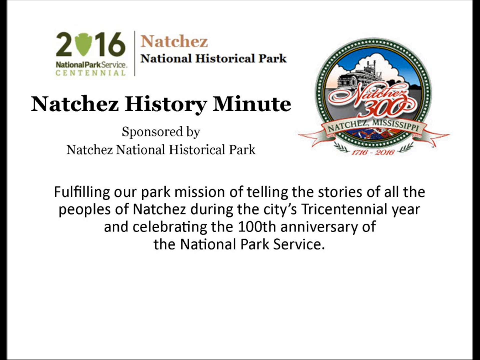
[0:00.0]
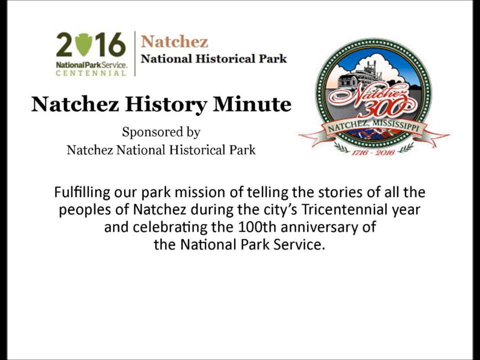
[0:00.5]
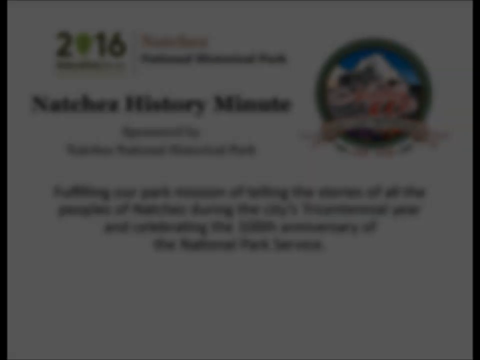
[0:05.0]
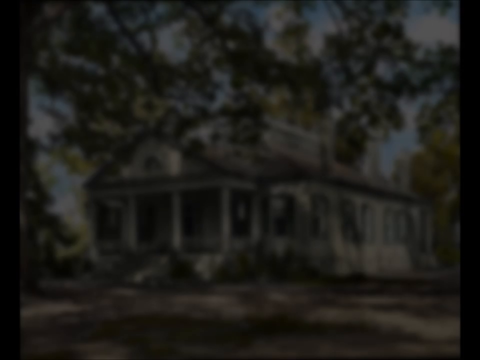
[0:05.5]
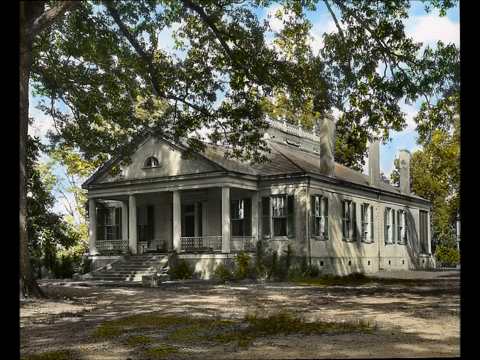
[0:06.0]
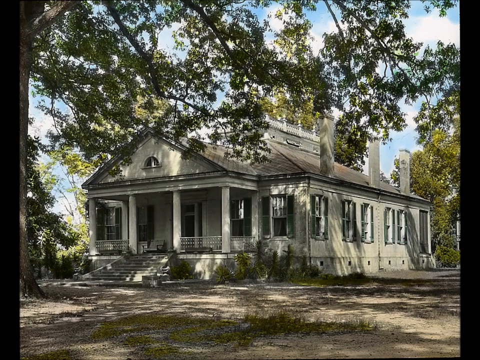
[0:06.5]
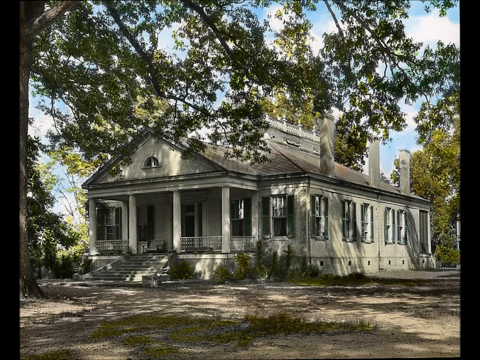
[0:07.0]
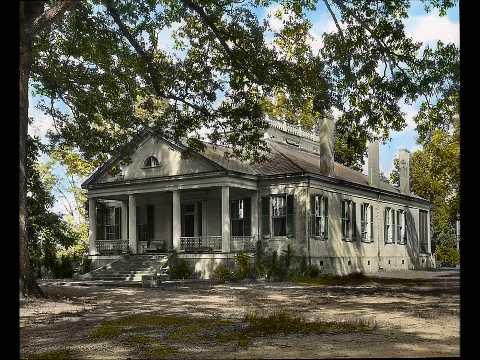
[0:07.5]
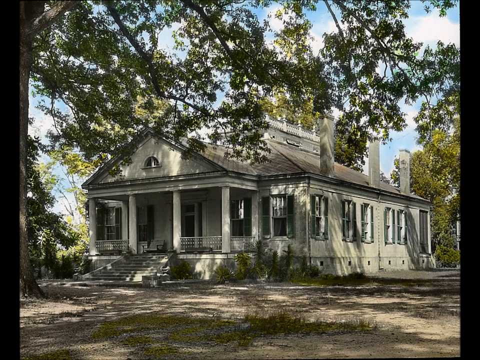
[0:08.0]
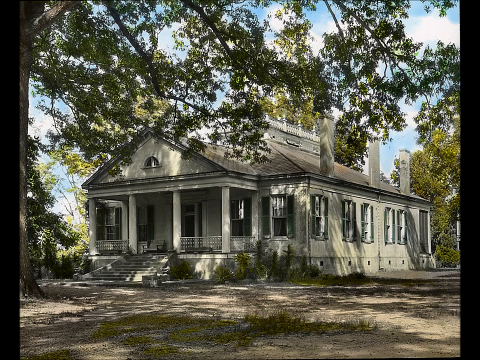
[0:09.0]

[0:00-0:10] A logo appears in the top right corner; it looks like it has a steamboat on it and reads "Neches, Mississippi." The screen almost looks like a certificate, with text reading "2019 National Park Service Centennial Neches National Historic Park Neches Historic Minute Sponsored by Neches National Historic Park fulfilling our park mission of telling the stories of all of the people of Neches during the city's tricentennial year and celebrating the hundredth anniversary of the National Park Service." The screen then goes black and switches to an old building that almost looks like a church. It has a big porch with a stairway that is narrow and gets wider, and it looks like it is made of concrete.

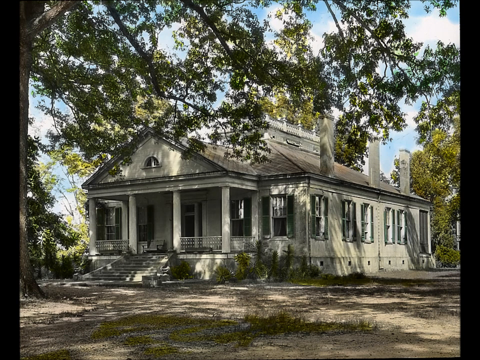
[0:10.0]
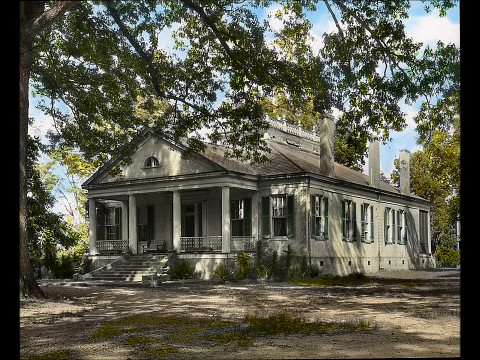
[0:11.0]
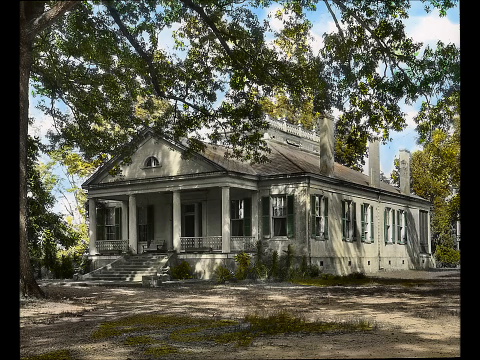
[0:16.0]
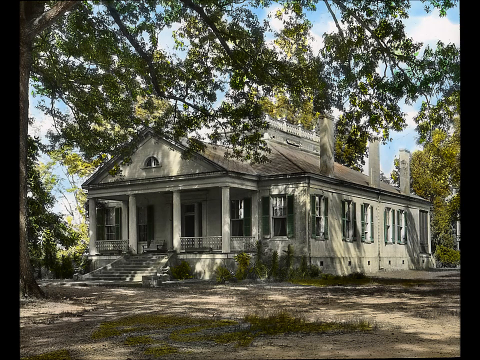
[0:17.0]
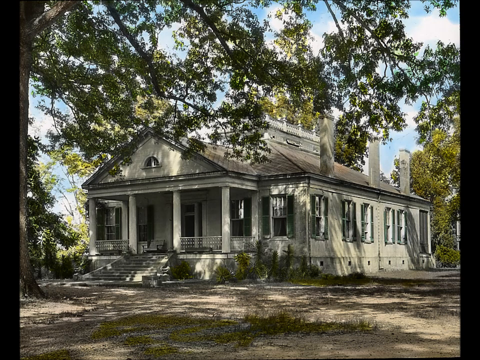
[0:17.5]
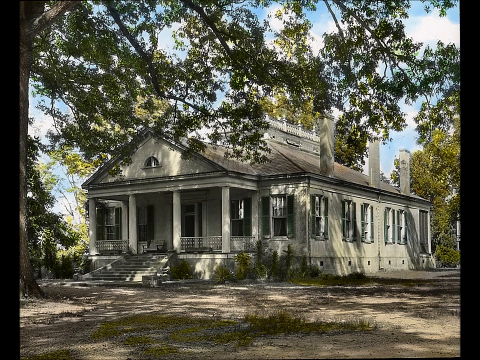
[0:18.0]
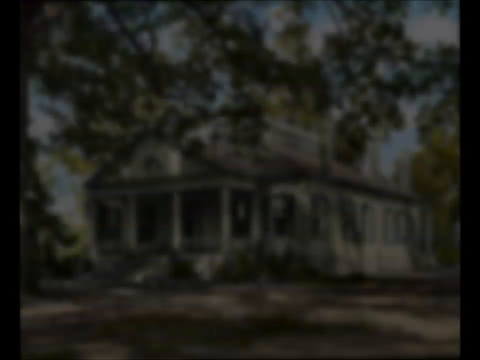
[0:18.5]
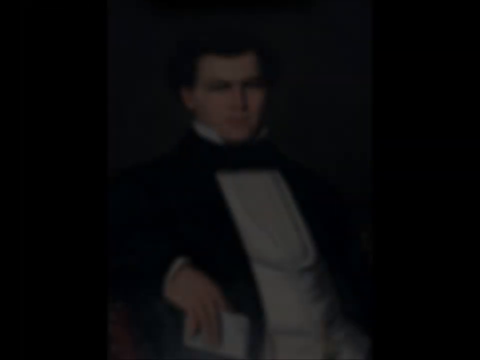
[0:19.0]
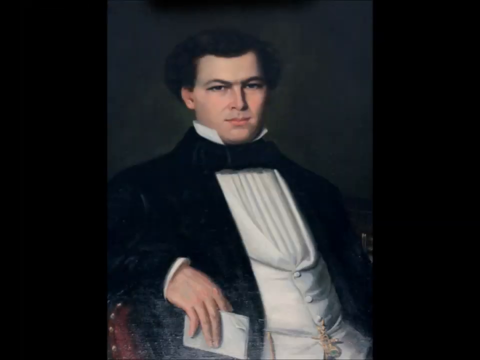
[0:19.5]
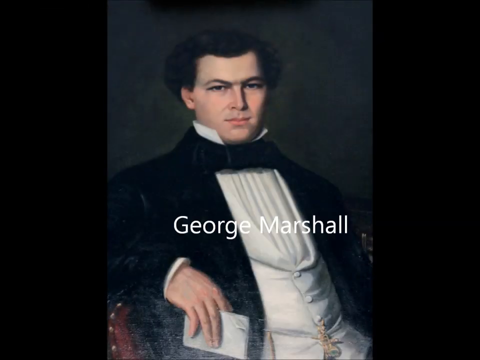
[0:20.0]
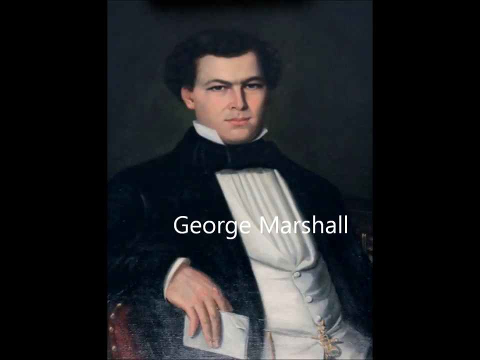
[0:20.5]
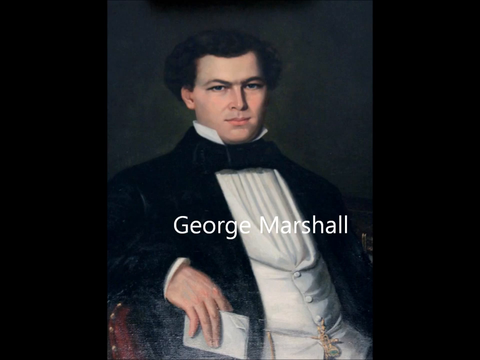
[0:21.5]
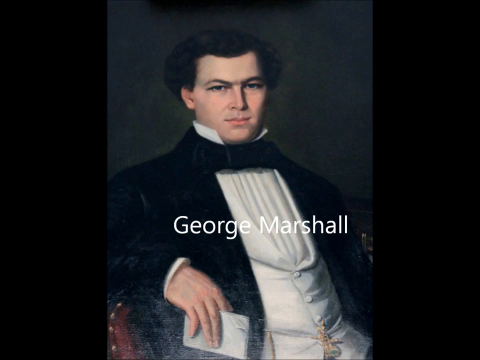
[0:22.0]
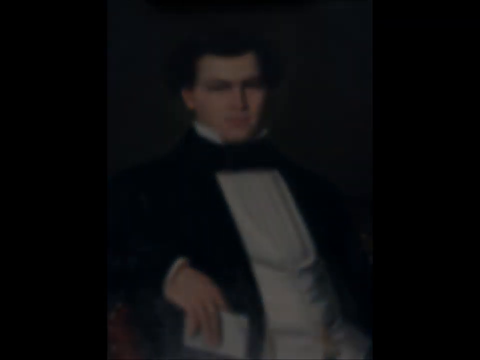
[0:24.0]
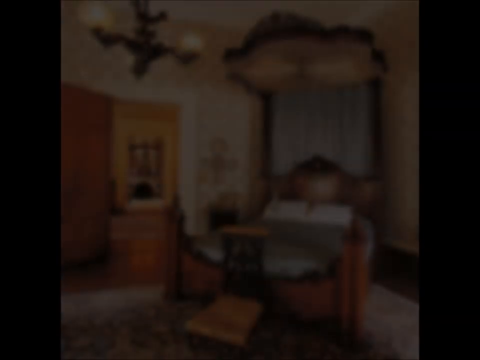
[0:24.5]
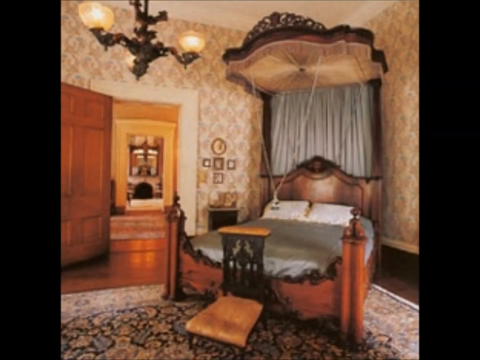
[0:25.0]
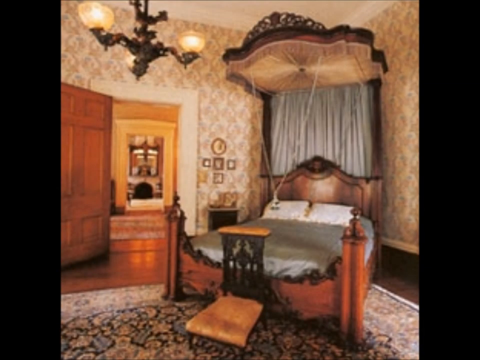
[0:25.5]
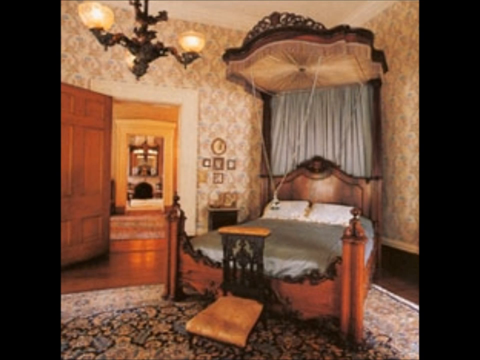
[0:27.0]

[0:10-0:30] A large white house that definitely looks older is shown. It has three chimneys and a big balcony, and it almost looks like a plantation home, except that it is only one story. Big trees are around it, and the yard has no grass; it almost looks like sand with dead leaves and similar debris. Every window has shutters, and there are probably about 25 windows on the house. The scene switches to an old portrait of a man named George Marshall, a white male. It looks definitely older and is not a photograph, possibly a painting. He wears a white shirt, a vest with buttons, a pleated shirt, a collar poking up, a bowtie and a jacket, and it looks like he has something between two of his fingers and his other three fingers. Next is what looks like a very old-style bedroom. The bed has a canopy with a lot of fabric and looks like maybe a full-size bed, with two pillows and a wood frame. There is wallpaper, a very old-looking chandelier, a wood floor and a wooden door. A couple of knickknacks are on the wall, and most of the furniture is wood.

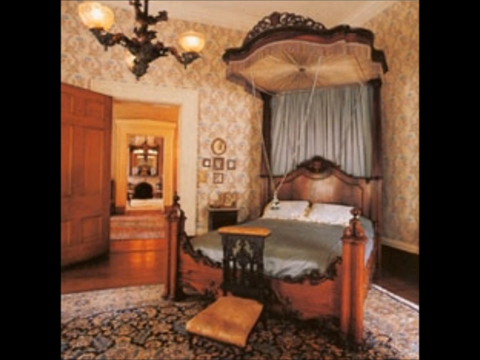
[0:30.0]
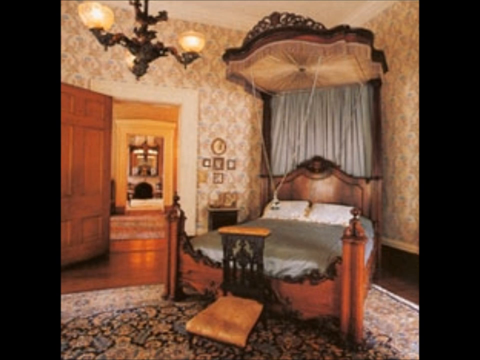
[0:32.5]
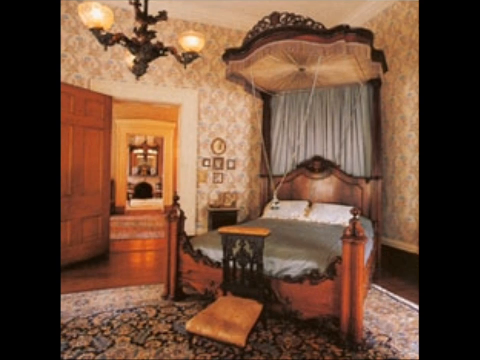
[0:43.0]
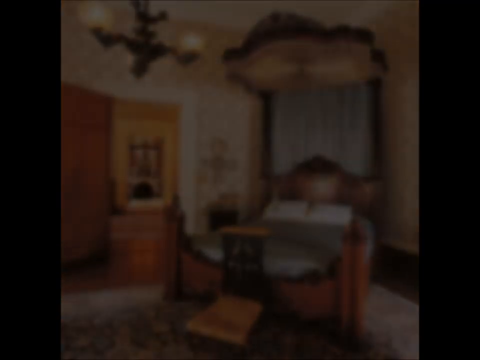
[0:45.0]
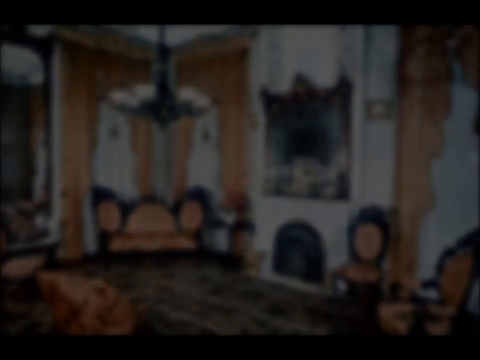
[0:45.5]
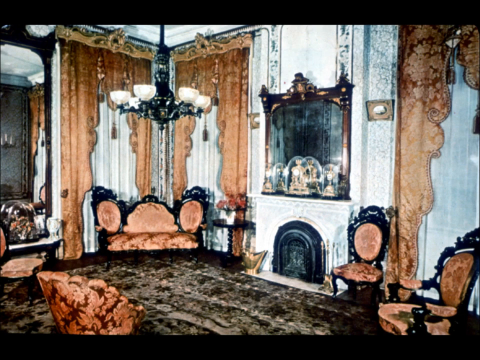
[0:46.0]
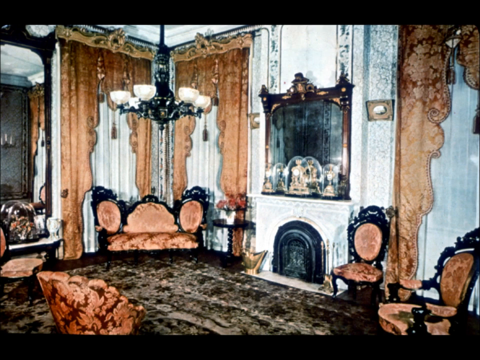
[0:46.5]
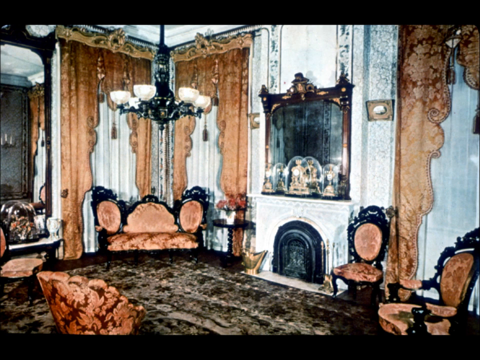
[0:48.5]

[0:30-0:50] The old-time bedroom remains in view. A big area rug is on the floor, so only maybe a foot or two of the wood is visible around it. The rug's base is black with flowers, and its border has a different design. At the headboard in the back, a white curtain seems to come down from the canopy. The scene switches to what looks like maybe a parlor or living room, decorated from a very long time ago and very ornate. The centerpiece is the fireplace, and there is no TV on the mantel; instead there is a really large mirror. Another very elaborate light fixture is in the center of the room. There are very grand orange curtains with thick, detailed gold metallic curtain rods that look like they have intricate designs on them. A white curtain peeks out from the orange because the orange does not cover completely, and there are gold tassels. The furniture matches the orange curtains, with black wood on the outside and orange cushions. There is another area rug.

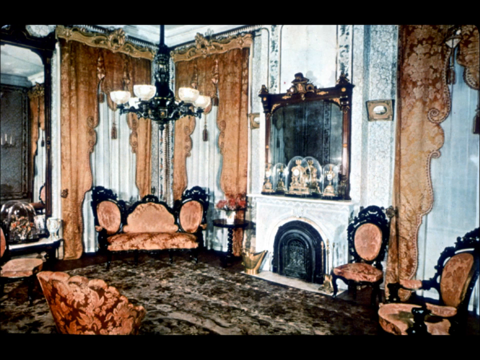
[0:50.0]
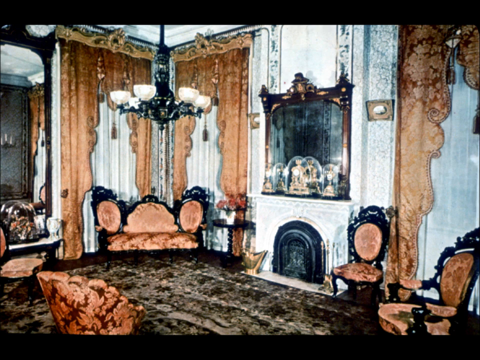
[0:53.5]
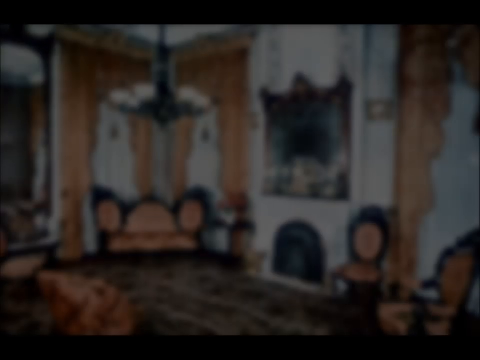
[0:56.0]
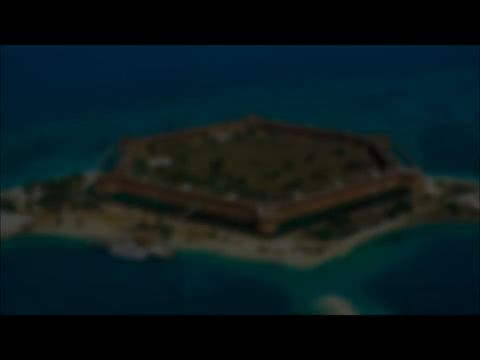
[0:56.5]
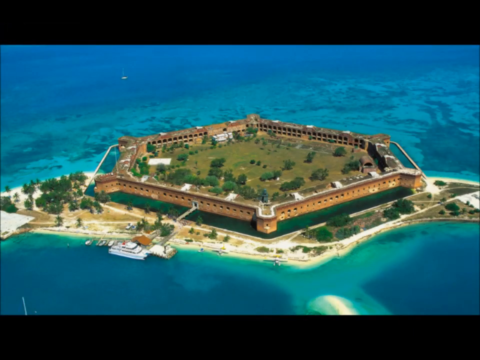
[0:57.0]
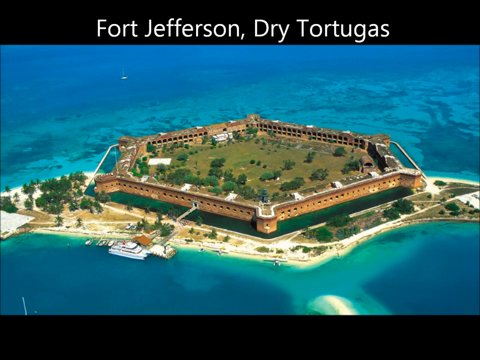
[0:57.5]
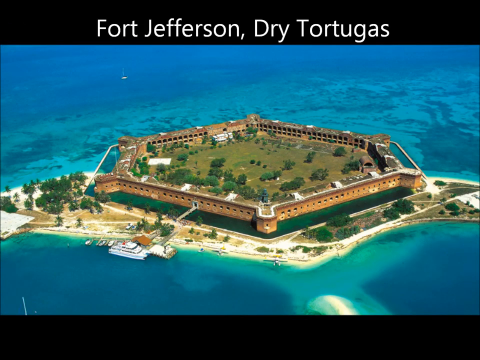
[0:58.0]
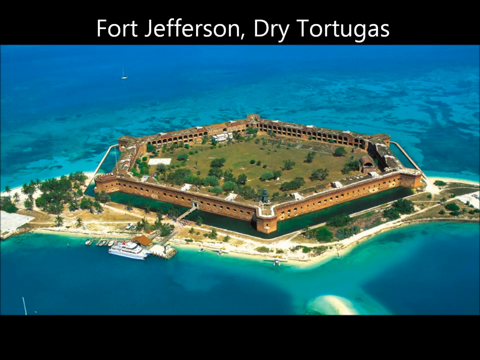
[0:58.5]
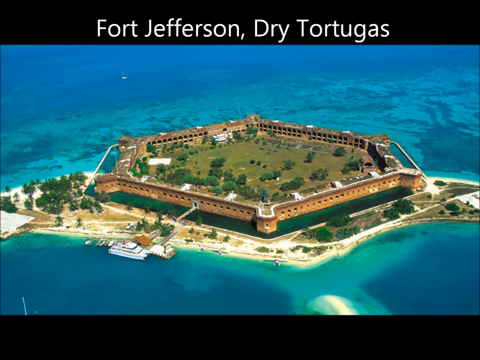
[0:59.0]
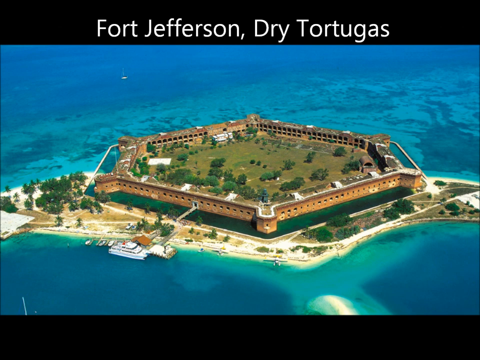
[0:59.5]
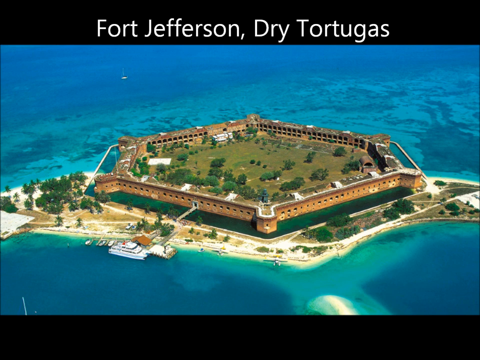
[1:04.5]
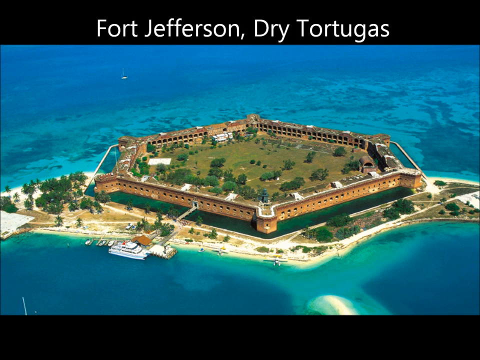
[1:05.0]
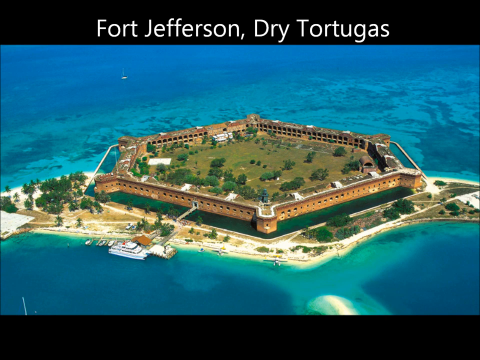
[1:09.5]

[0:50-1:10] The fireplace is white, and the mantel has a black wrought iron covering. The scene then switches to what looks to be either a military fort or a prison, with text reading "Fort Jefferson in the dry Tortugas." The fort is octagon-shaped and looks about two stories high, with many openings that look like prison cells. It is completely surrounded by very light blue water, and there are beaches where it is shallow, with probably about a hundred feet of beach on each side. Inside the fort there is grass and trees. Some boats are docked at the fort, and the entrance is an opening with a bridge leading right in.